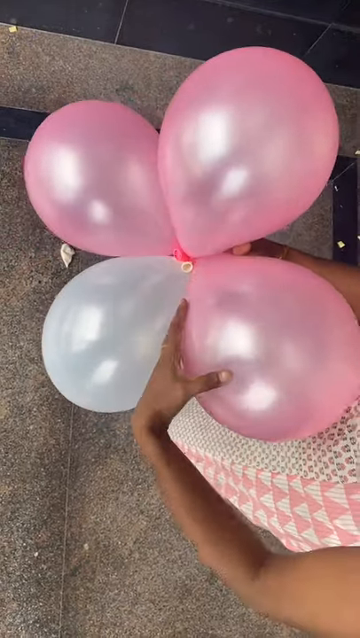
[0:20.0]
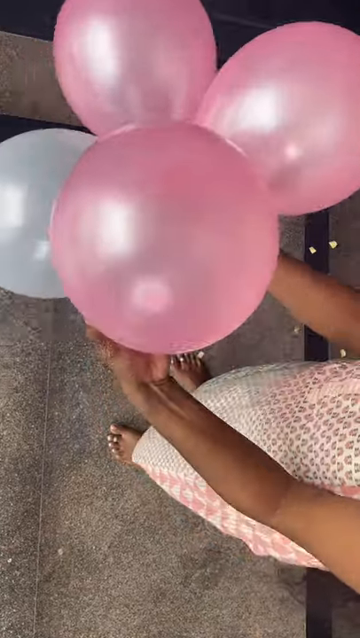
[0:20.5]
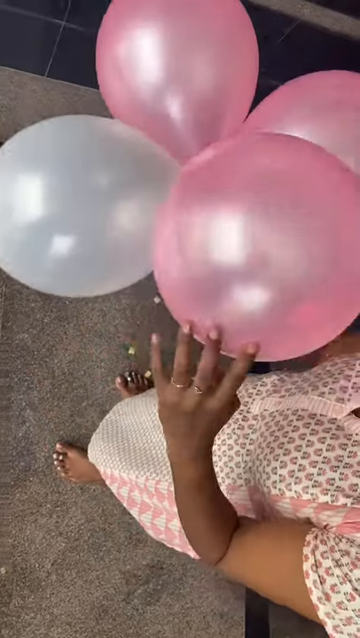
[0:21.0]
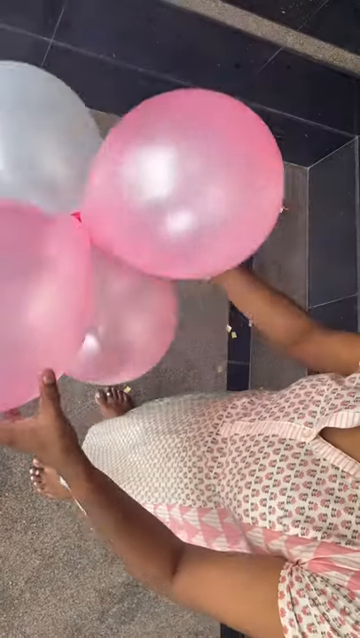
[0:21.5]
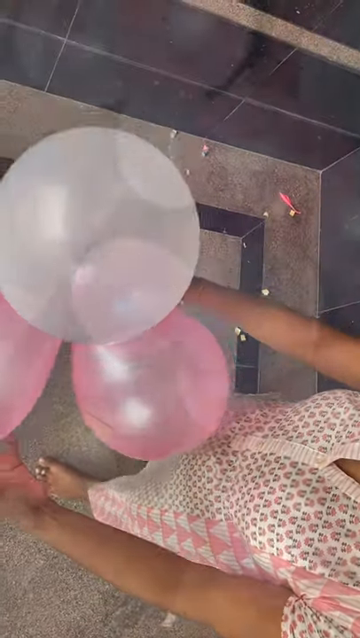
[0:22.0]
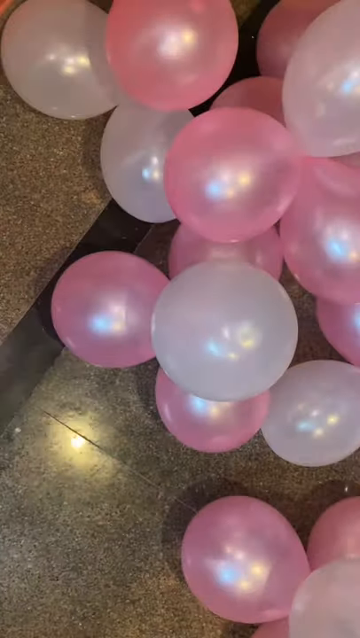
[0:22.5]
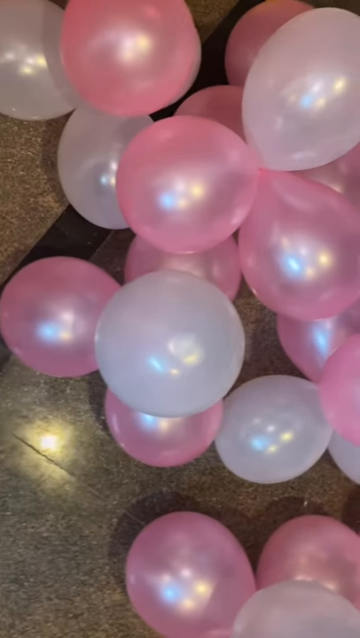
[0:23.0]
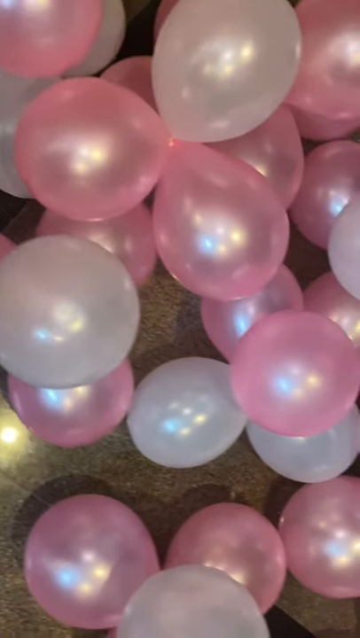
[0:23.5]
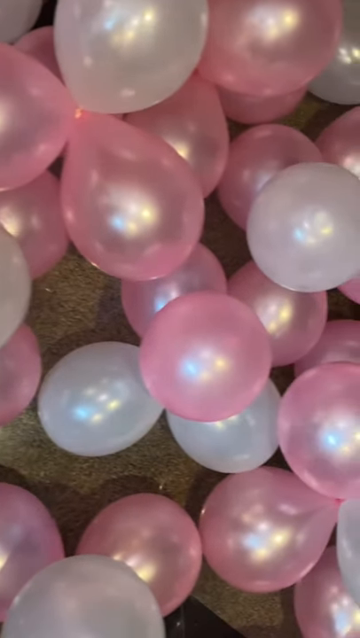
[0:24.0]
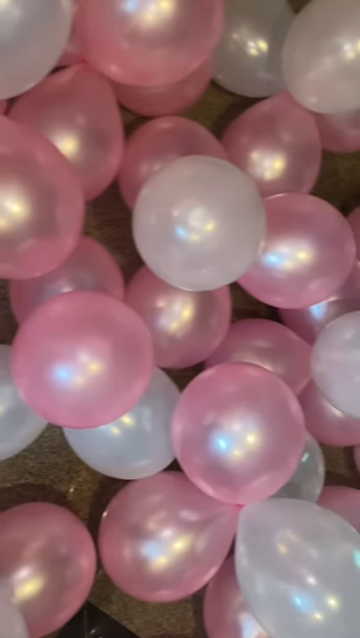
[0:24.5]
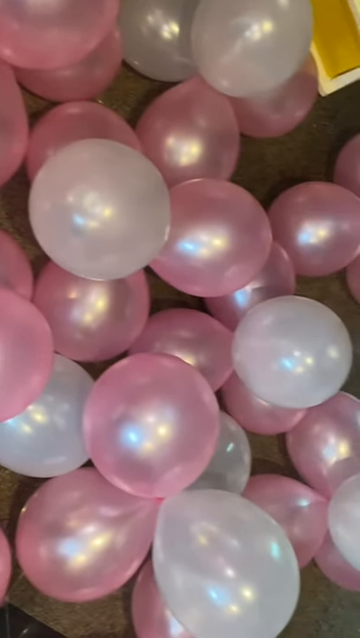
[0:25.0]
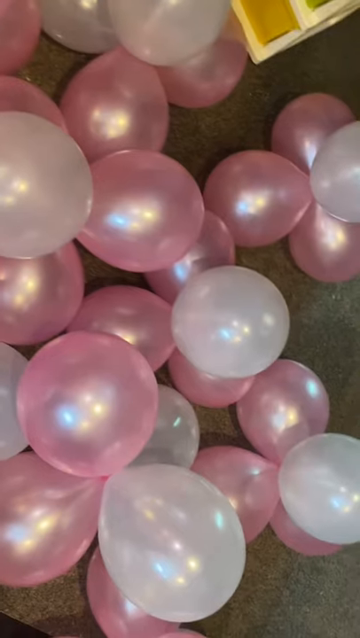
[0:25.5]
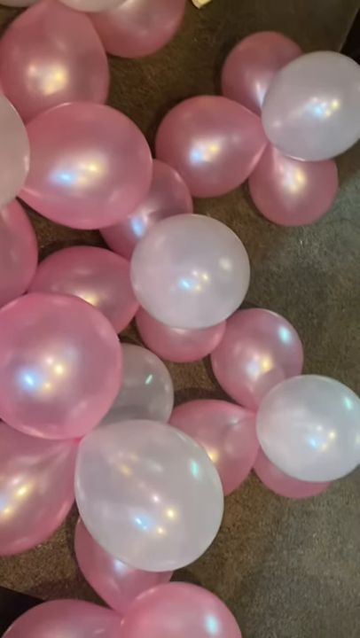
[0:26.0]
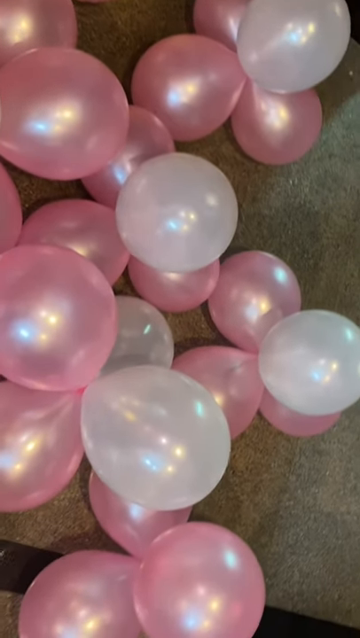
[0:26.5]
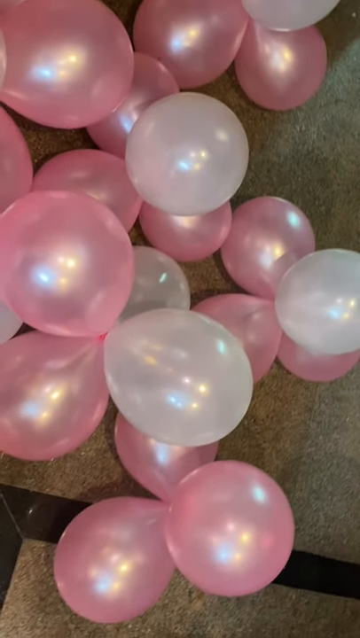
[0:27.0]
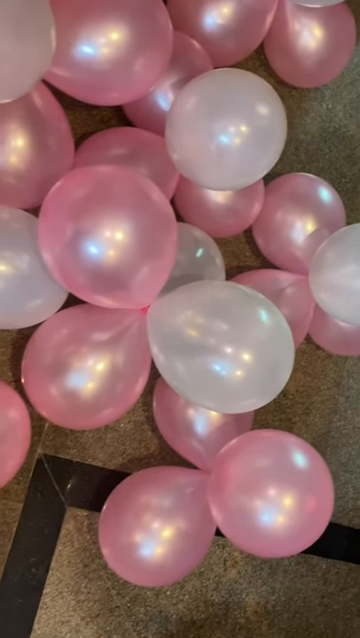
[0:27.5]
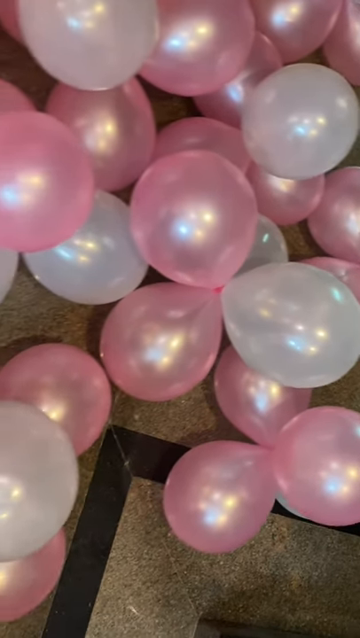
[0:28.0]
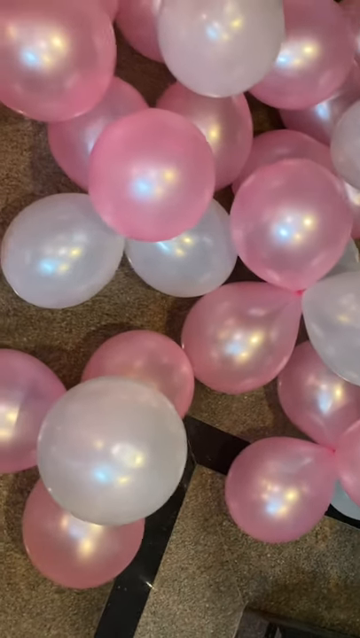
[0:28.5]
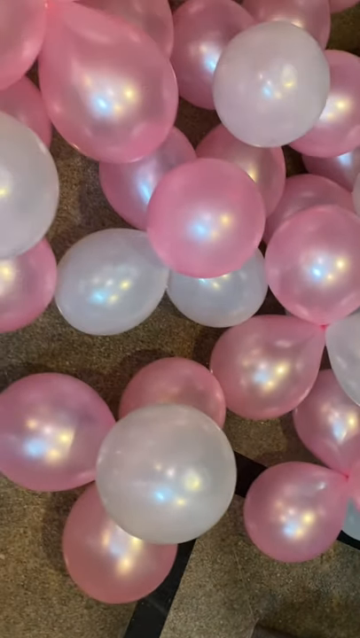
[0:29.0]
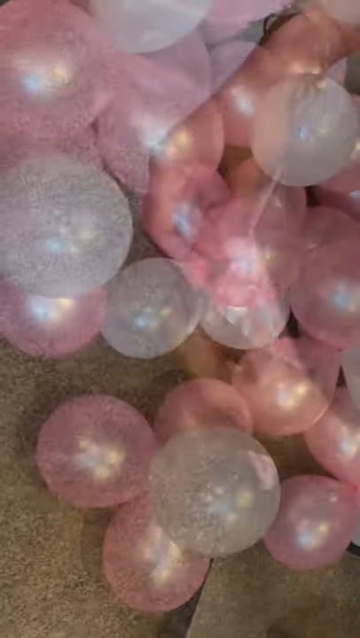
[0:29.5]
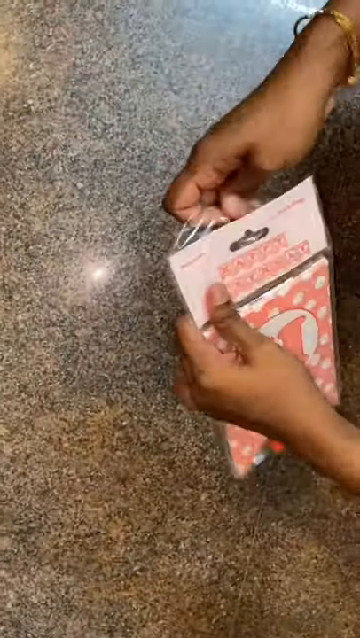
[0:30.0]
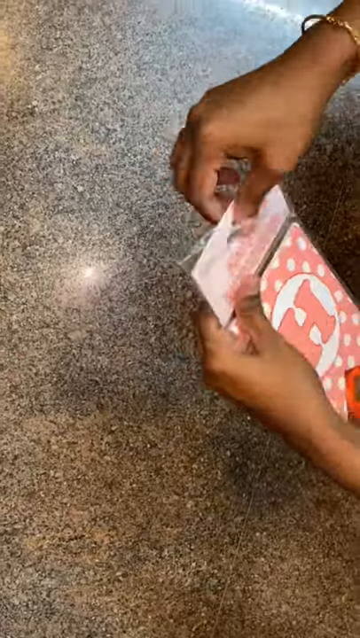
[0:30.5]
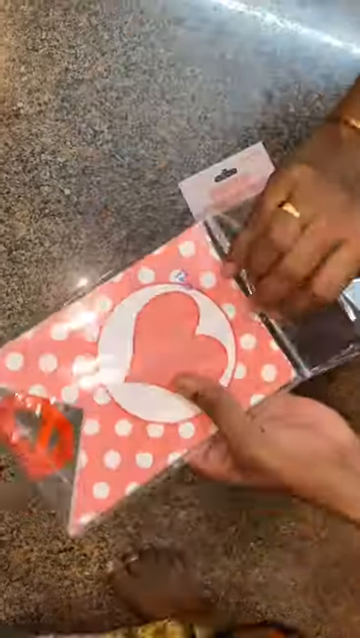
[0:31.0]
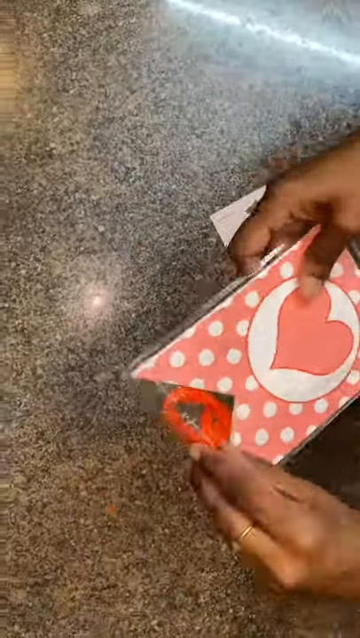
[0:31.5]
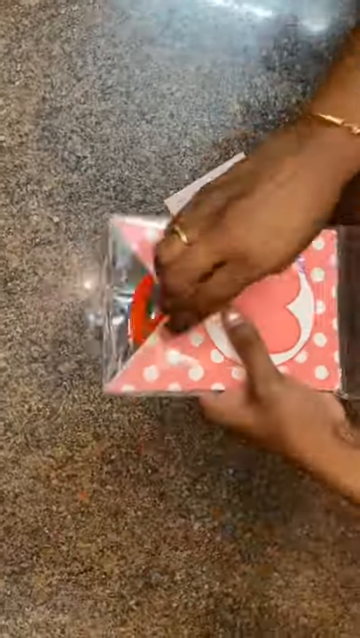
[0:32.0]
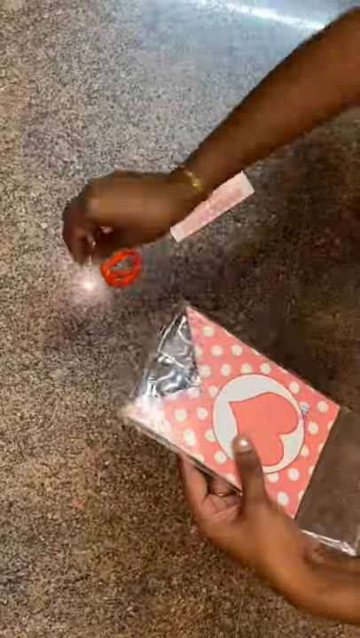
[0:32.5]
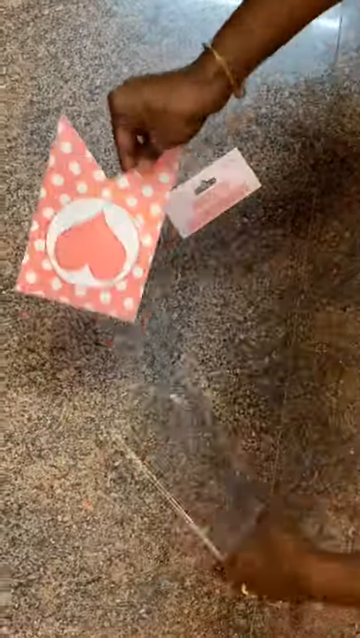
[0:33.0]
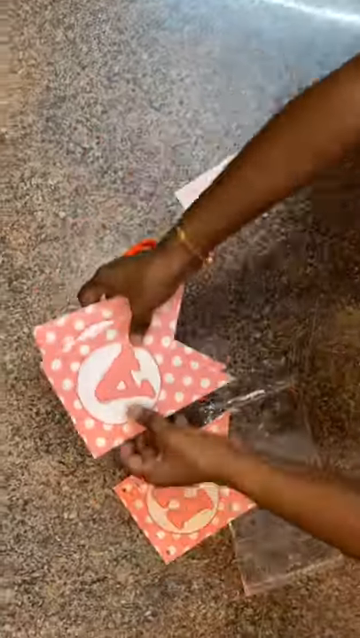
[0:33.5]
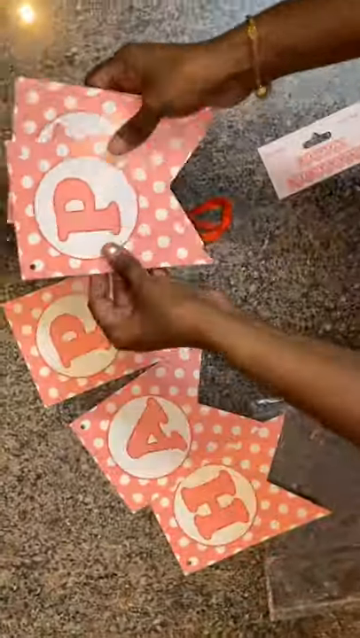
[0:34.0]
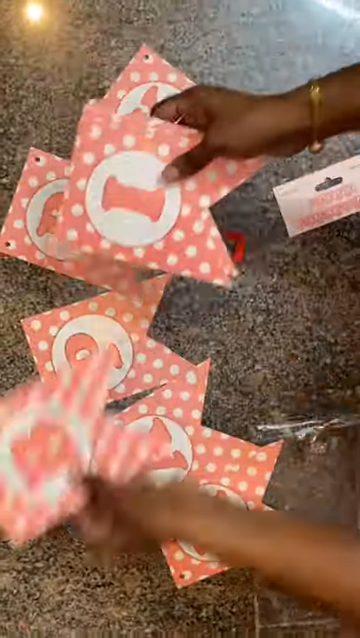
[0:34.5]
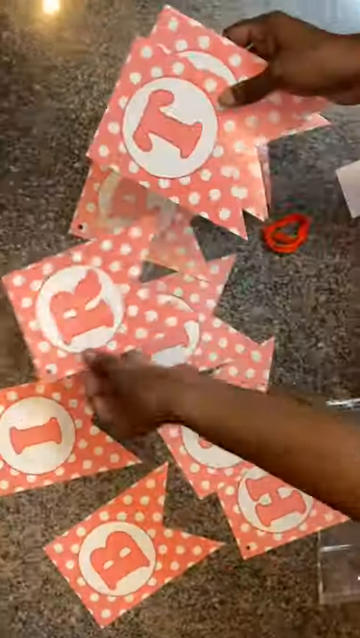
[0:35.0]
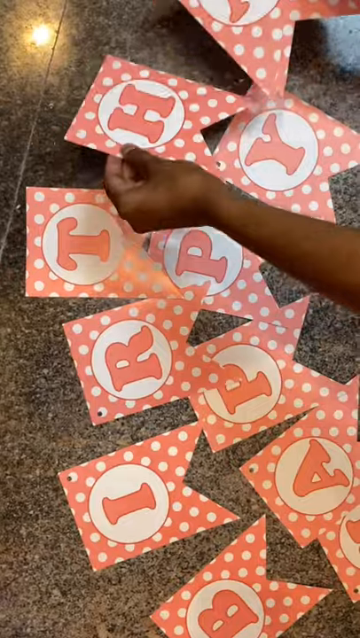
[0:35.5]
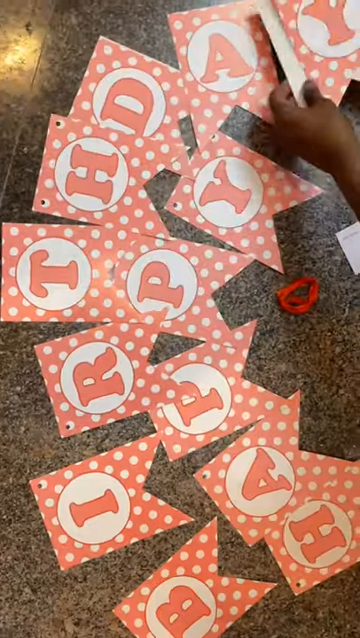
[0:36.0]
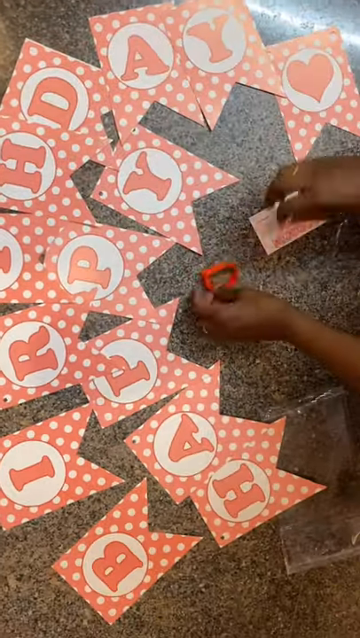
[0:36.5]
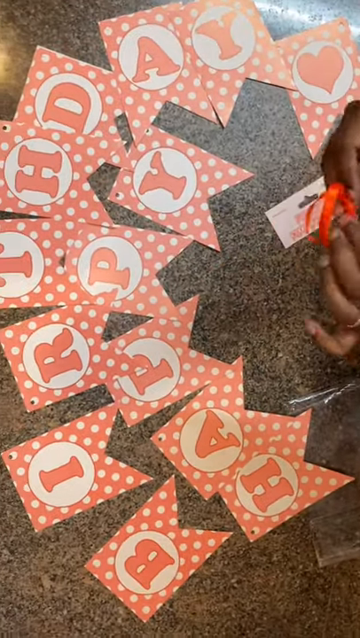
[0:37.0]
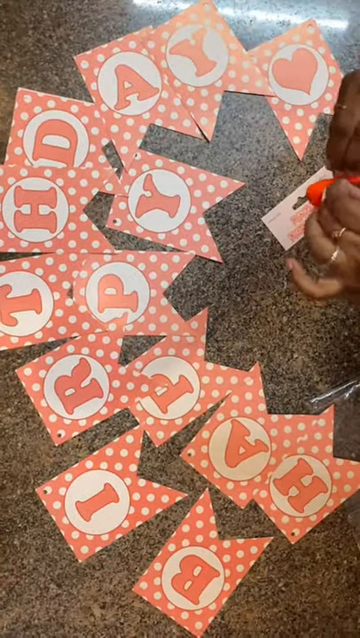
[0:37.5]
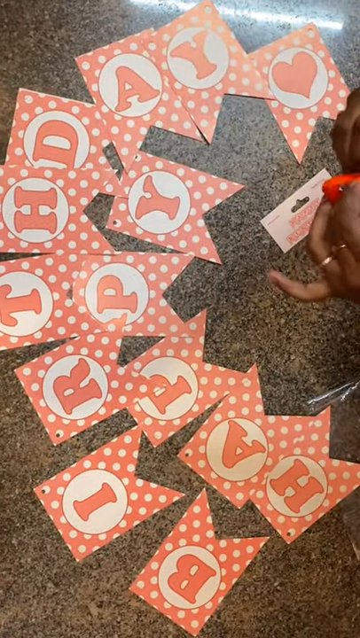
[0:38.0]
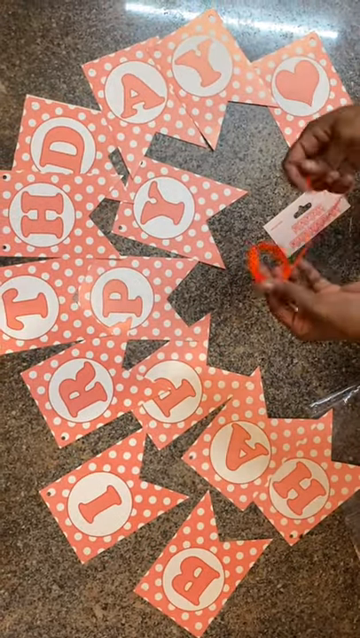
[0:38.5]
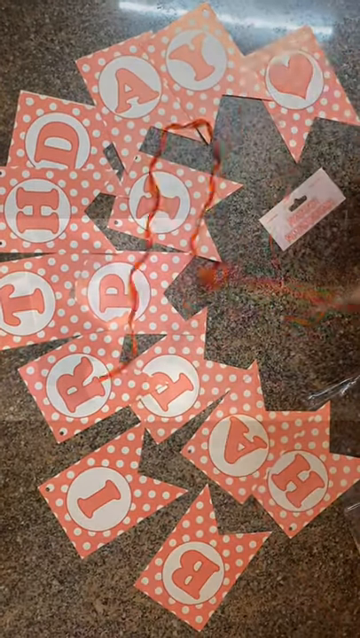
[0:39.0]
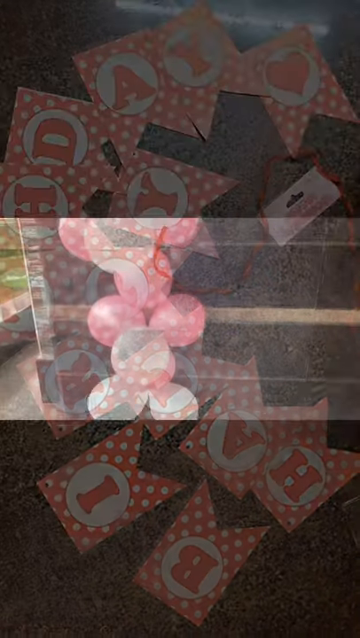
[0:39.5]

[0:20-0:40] Somebody stands on a carpet with two hands holding four balloons together, which look like they have been tied together to form something almost like a flower, almost like a four-leaf clover. The person spins the balloons around. The scene changes to a bunch of balloons, probably about 40 or 50, thrown all over the floor. Next, a person opens a plastic bag with some unreadable writing on a label at the top. The person turns the bag around, showing a heart shape on the bag or its contents, with red and white polka dots around the heart. The right hand has a gold ring on it, and there is gray carpet behind the hand. The hands are black and belong to a Black person. The person pulls out everything inside the bag: a bunch of cards with letters, which they line up to spell out "happy birthday."